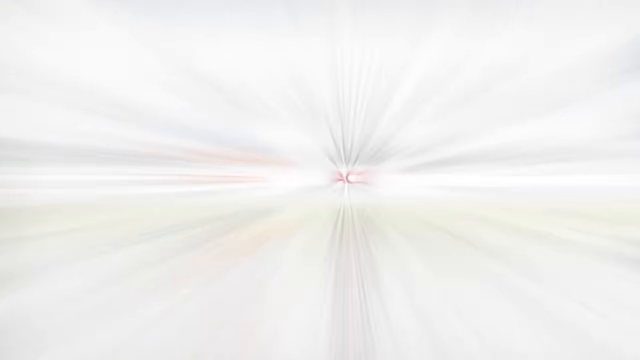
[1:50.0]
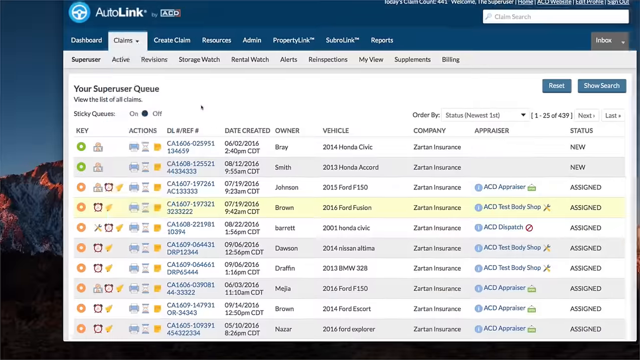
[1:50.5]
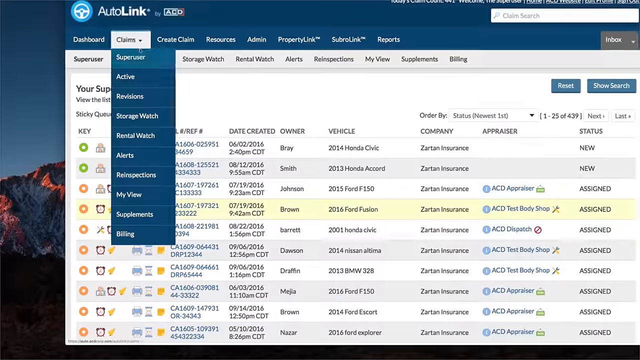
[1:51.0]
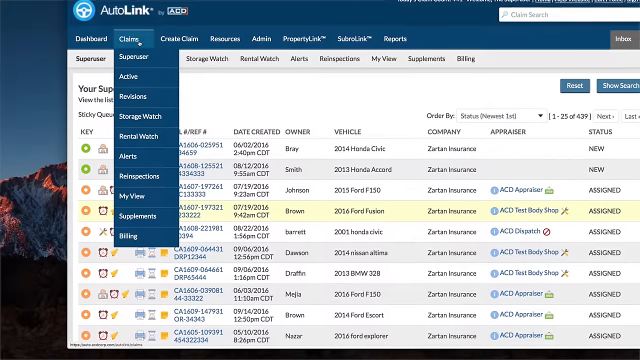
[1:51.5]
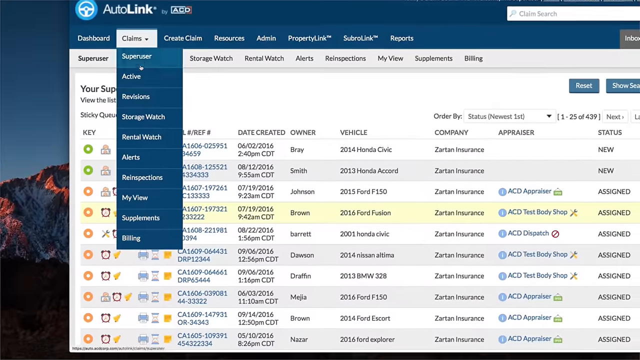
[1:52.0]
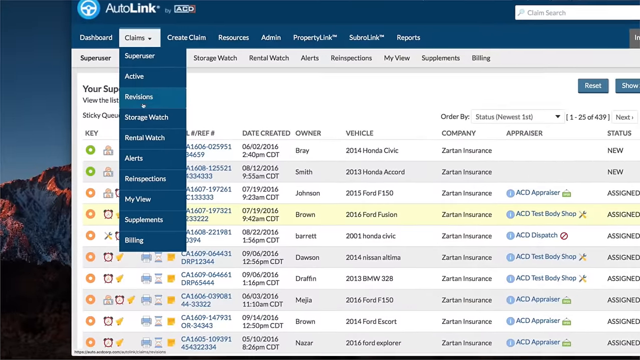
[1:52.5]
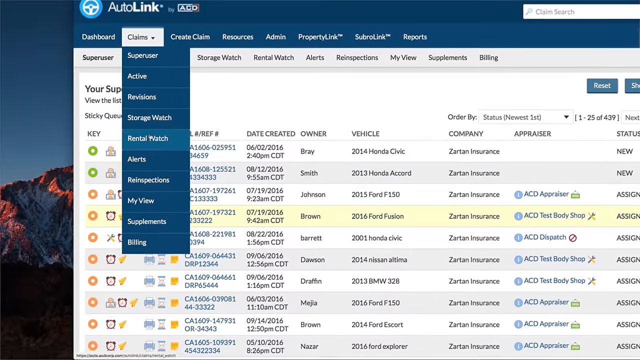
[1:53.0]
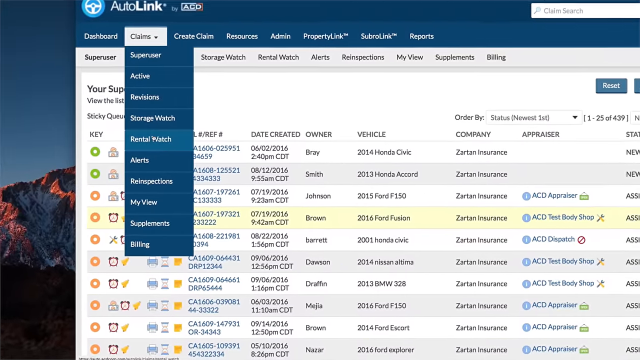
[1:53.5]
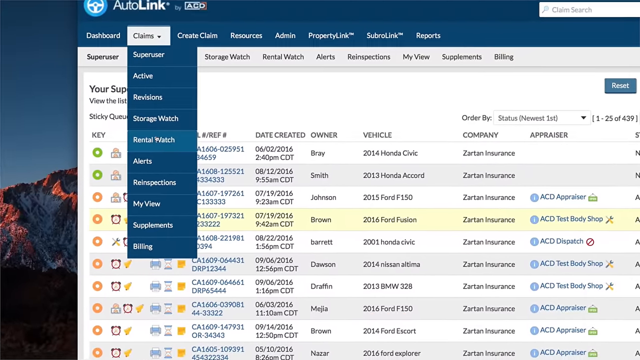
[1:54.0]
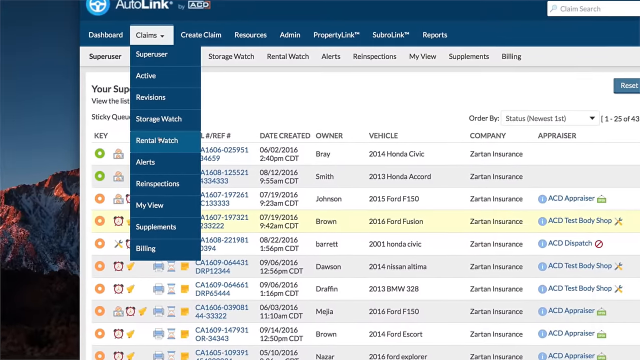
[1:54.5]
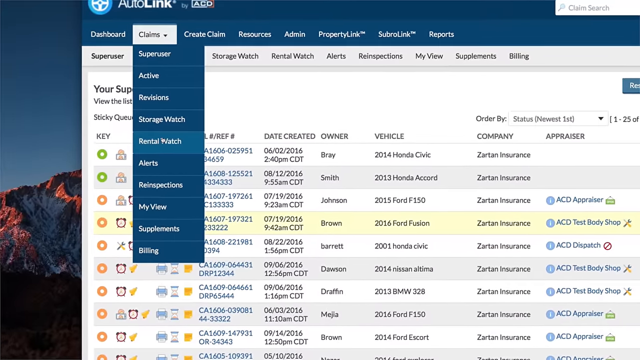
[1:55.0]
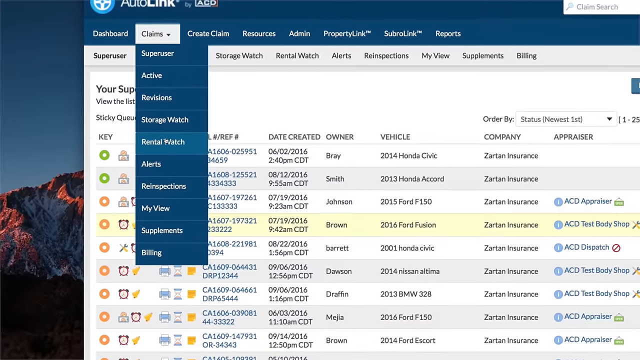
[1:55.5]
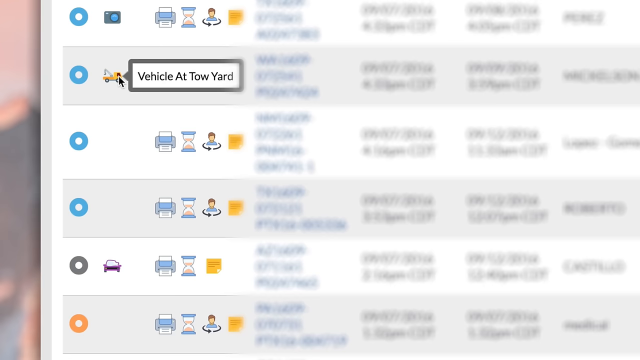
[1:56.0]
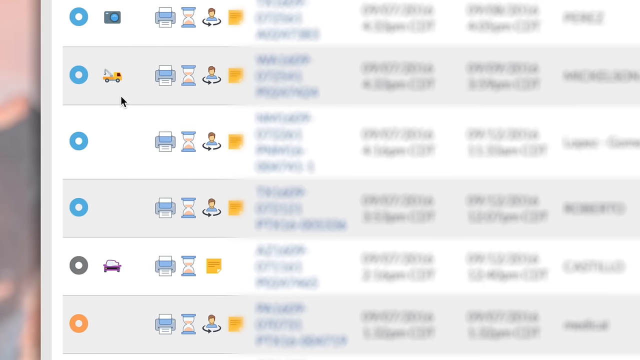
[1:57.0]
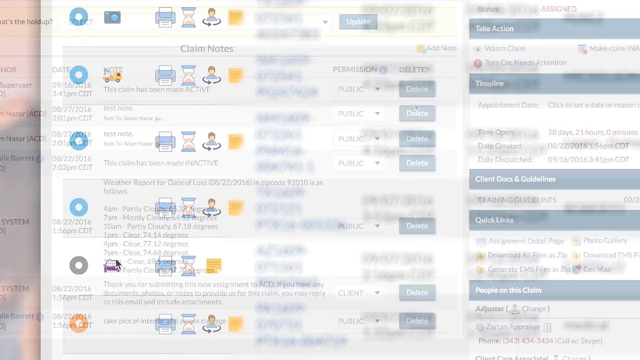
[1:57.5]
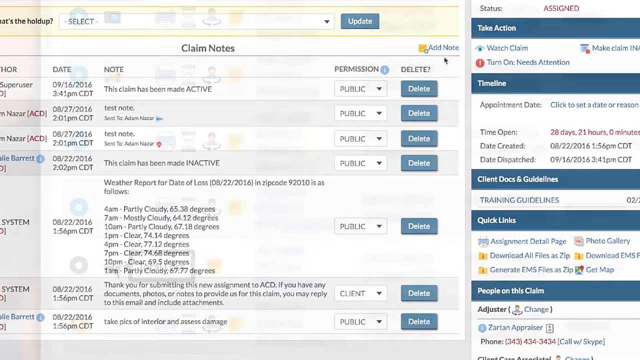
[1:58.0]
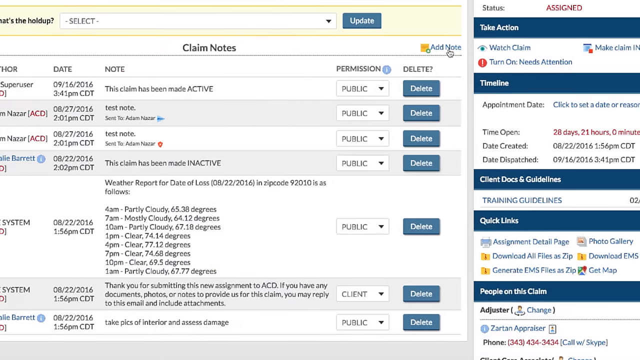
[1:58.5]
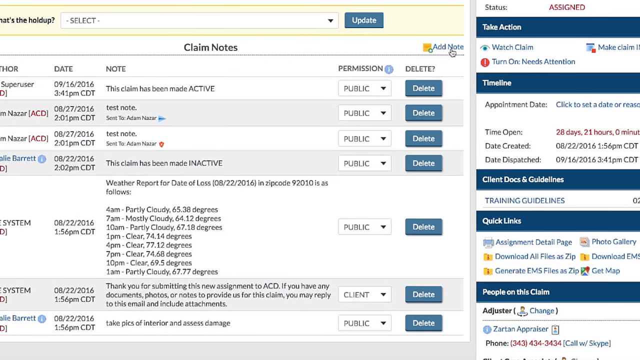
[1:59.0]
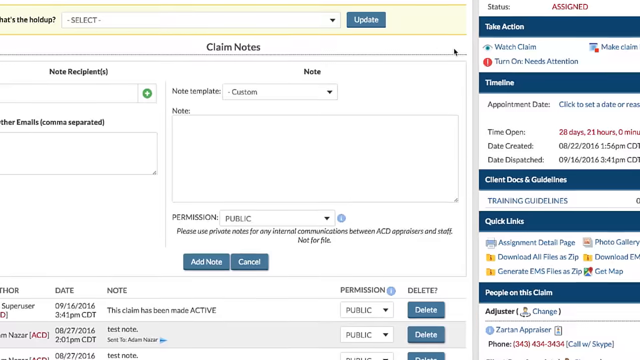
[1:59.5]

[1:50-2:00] The view returns to the AutoLink website page with the list of claims, which is the tab highlighted at the top of the page. The cursor goes up to claims and selects rental watch. Next comes a web page whose text cannot be read, with some icons on the left of the page. The vehicle at the tow yard item, an icon of a yellow tow truck, is highlighted and clicked by the black cursor. This leads to another page where claim notes can be made, with the cursor hovering over the words "add notes" and a series of notes below. Clicking add notes opens a data collection page for entering notes about what seems to be an insurance claim. It has fields for note recipients and for other emails, comma separated, a drop-down box for notes template, a big box for notes, and below that a drop-down box showing "public". Below that are two blue buttons with "add note" and "cancel" printed on them in white.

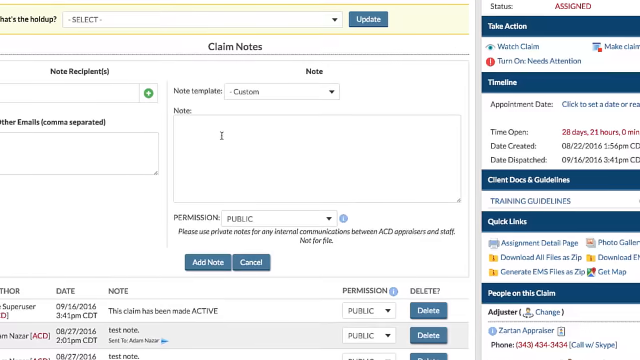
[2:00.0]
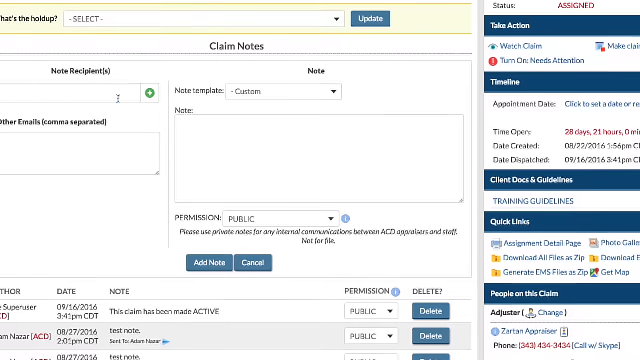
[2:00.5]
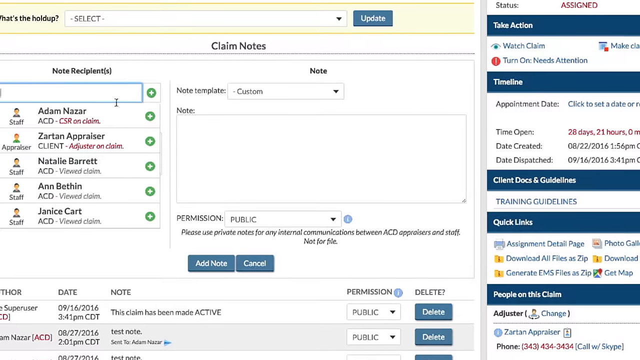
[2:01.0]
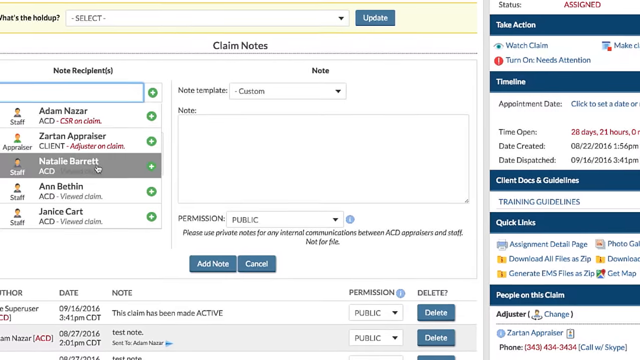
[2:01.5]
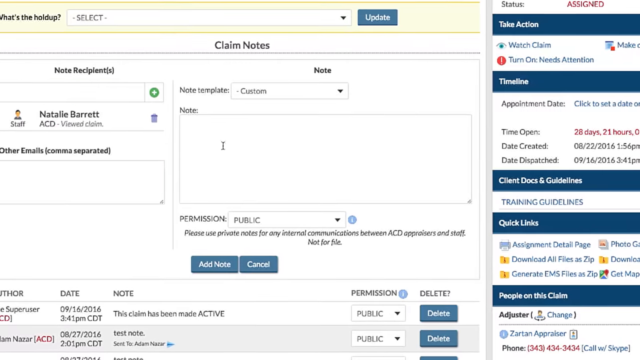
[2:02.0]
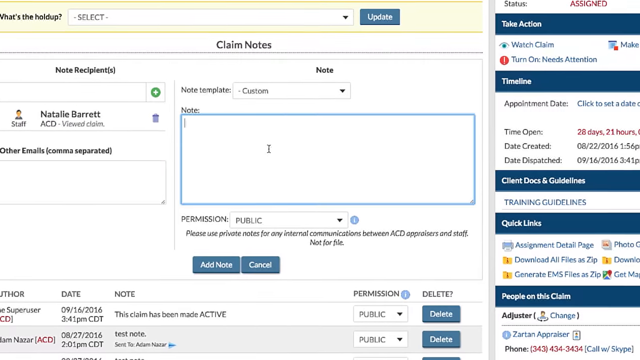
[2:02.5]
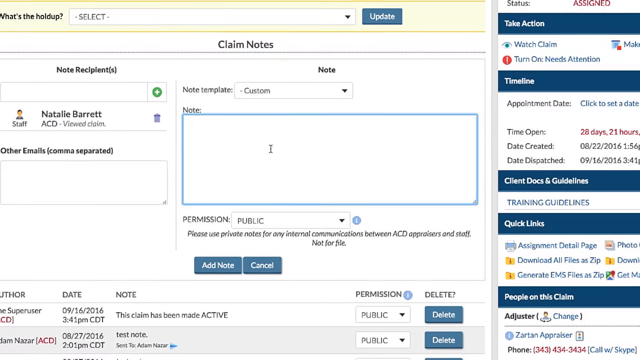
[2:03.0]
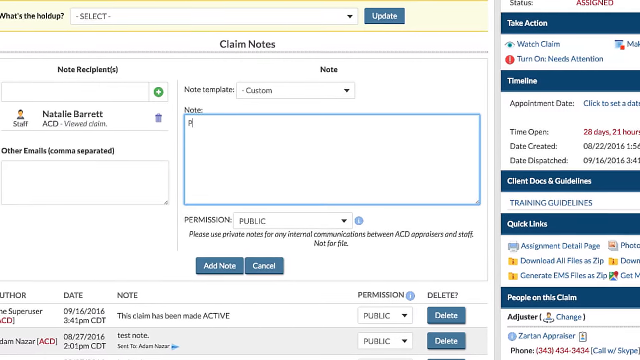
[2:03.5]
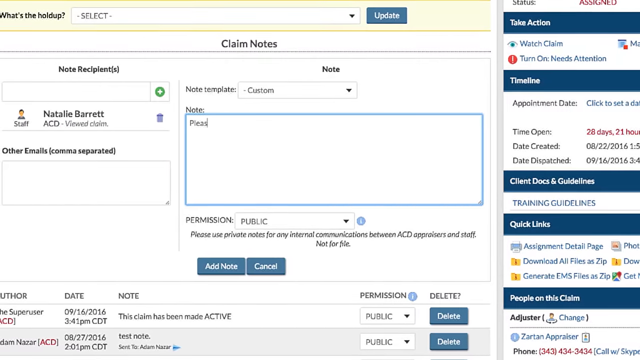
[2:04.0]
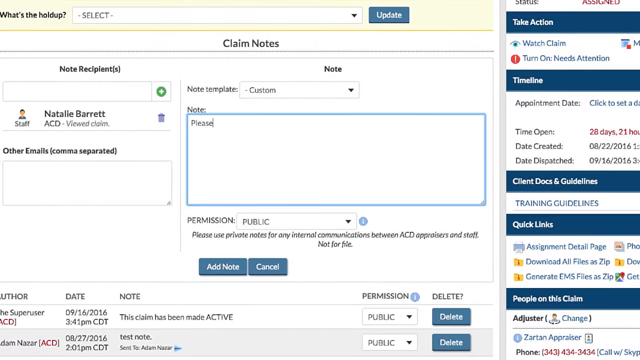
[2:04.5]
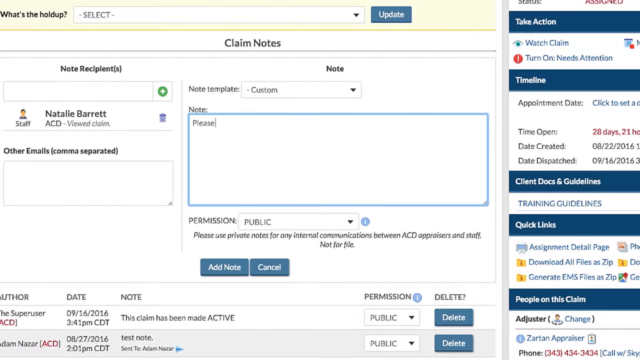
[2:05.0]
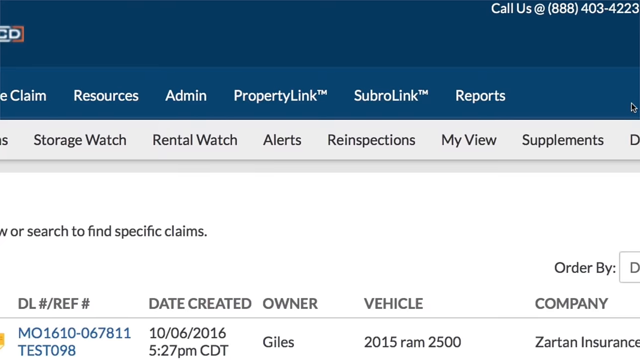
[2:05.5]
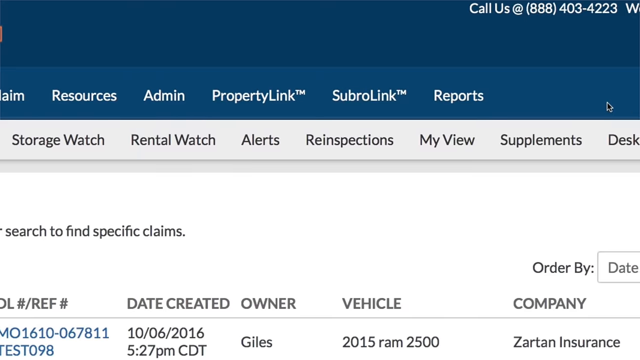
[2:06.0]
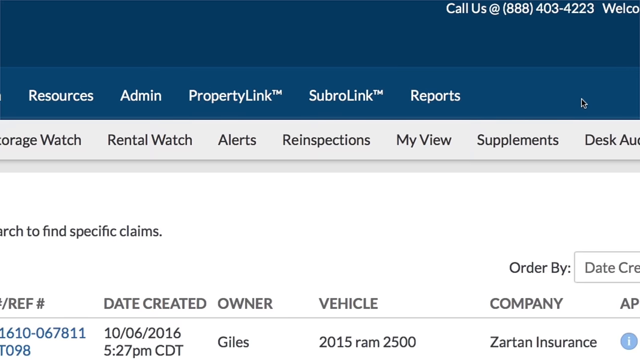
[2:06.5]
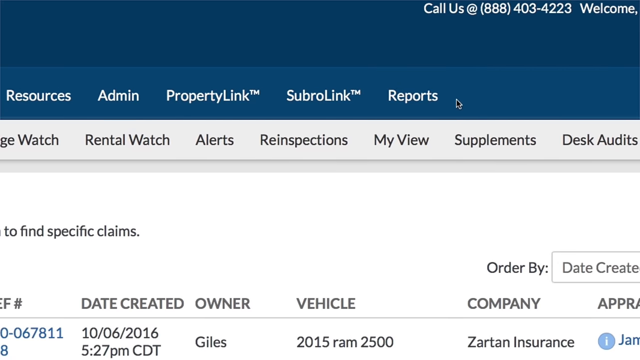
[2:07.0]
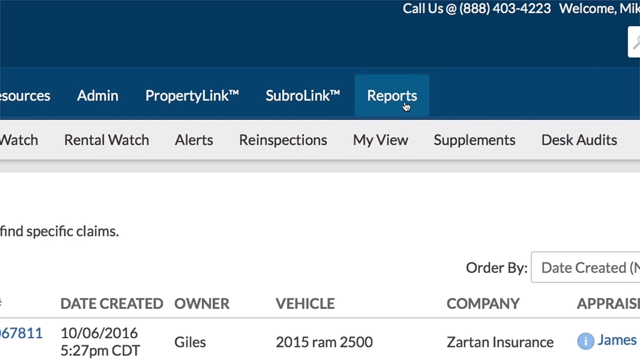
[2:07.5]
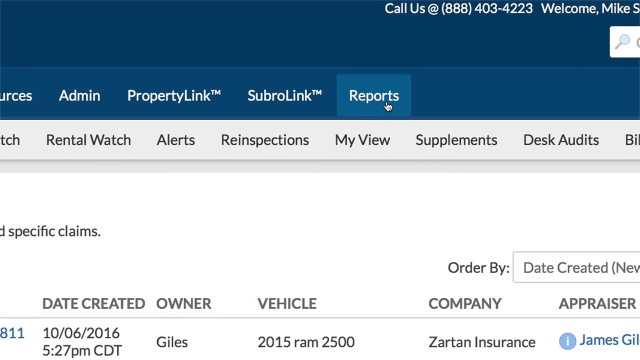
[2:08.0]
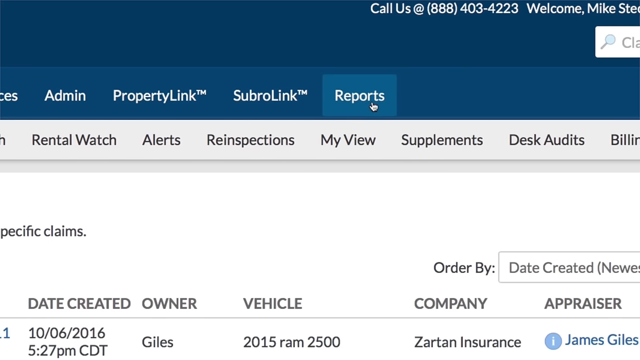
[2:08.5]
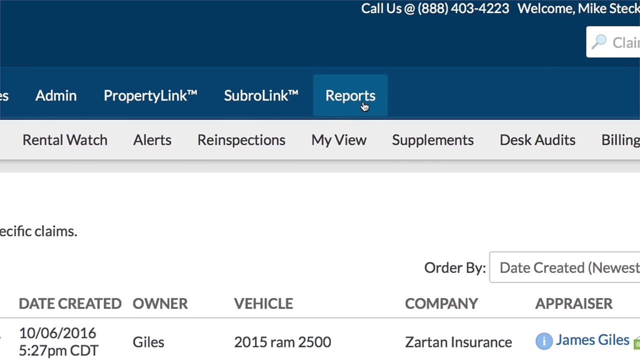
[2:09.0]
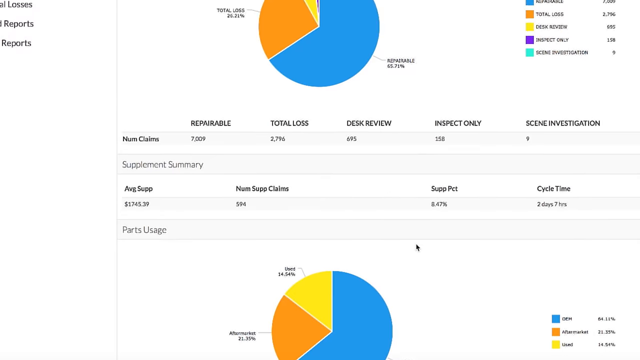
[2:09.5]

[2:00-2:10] On the claim notes page, the cursor goes to the left and selects note recipients from a drop-down box offering Adam Nazar, Zoltan Appraiser, Natalie Barrett, and Bethyn and Janice Carte. Next to each person is a very simple, basic icon of a person's face: for staff it is a face with a blue shirt, and for appraiser it is a face with red hair and a green shirt. Natalie Barrett ACD is selected, and then the notes field is highlighted and the word "please" is typed into it. The top bar of the web page appears, scrolling to the right, and the cursor highlights the word "reports". A page with two pie charts is shown. The first pie chart contains four segments: repairable, the largest, is a blue wedge at 45.71%; total loss is an orange wedge at 26.21%; desk review is a yellow wedge at 9.52%; and inspect only is a purple wedge that takes up most of the rest of the circle. There is also scene investigation at 0.09%. Below that are numbers of claims: 7,009 repairable, 2,796 total loss, 695 desk review, 150 inspect only, and 9 scene investigation. The top of another pie chart is then shown, but only very briefly.